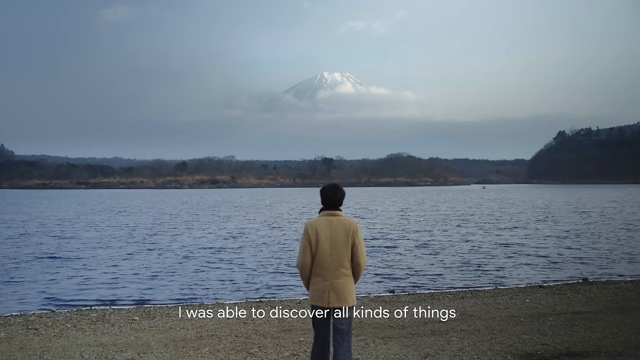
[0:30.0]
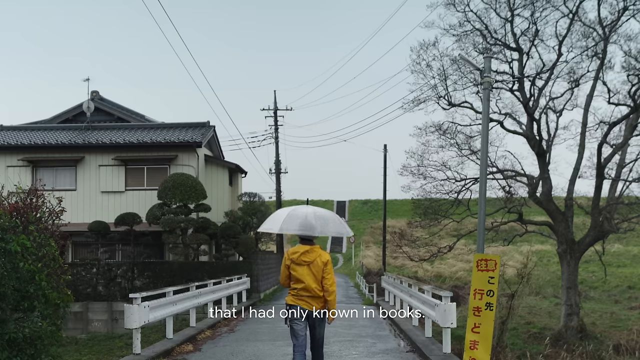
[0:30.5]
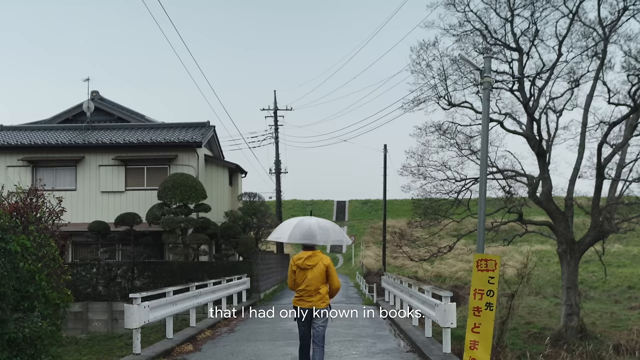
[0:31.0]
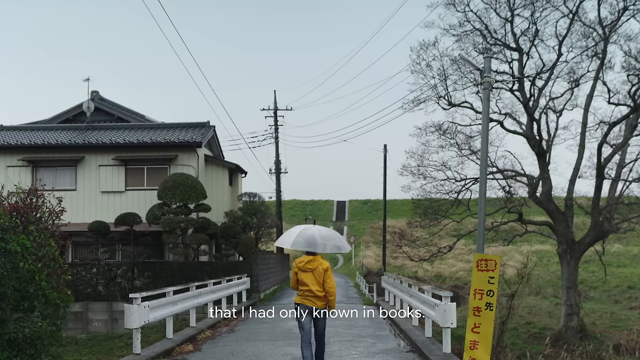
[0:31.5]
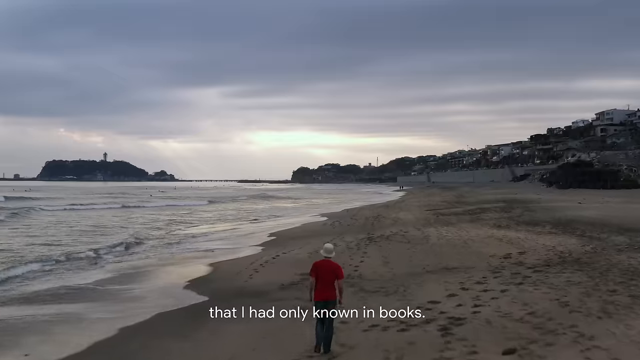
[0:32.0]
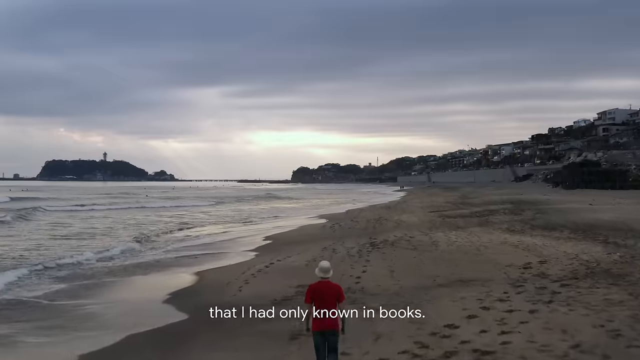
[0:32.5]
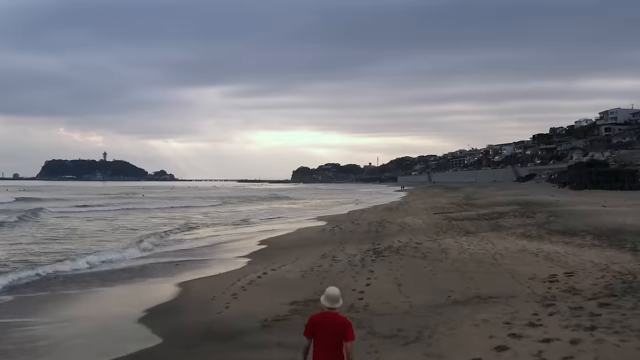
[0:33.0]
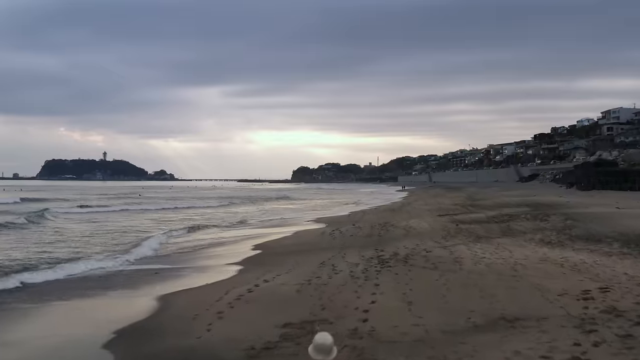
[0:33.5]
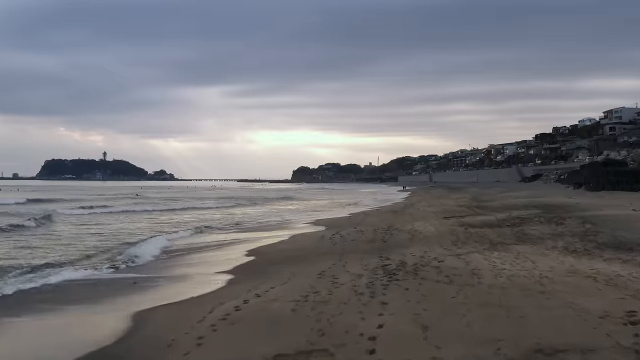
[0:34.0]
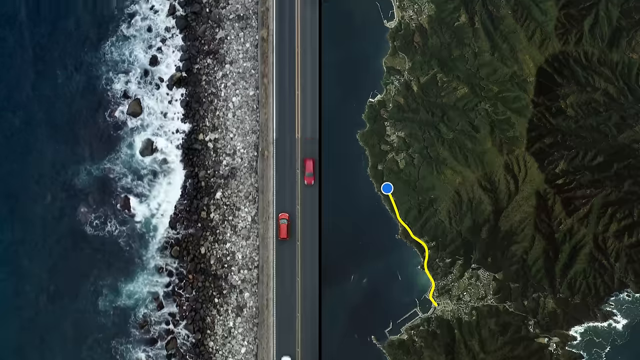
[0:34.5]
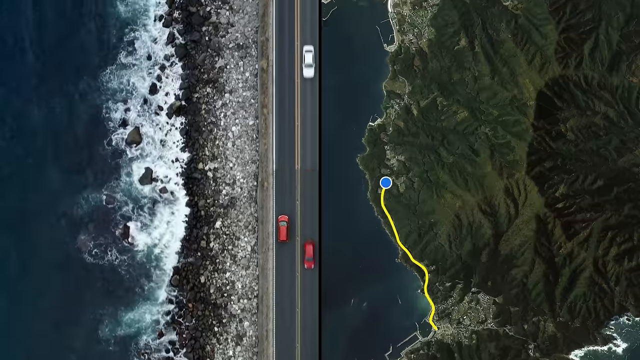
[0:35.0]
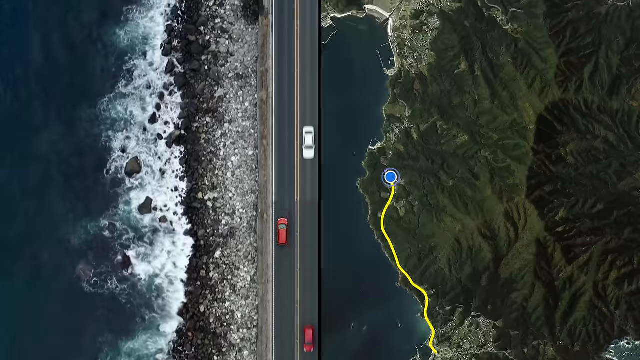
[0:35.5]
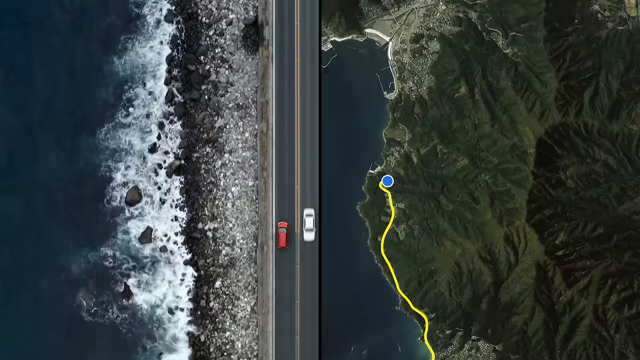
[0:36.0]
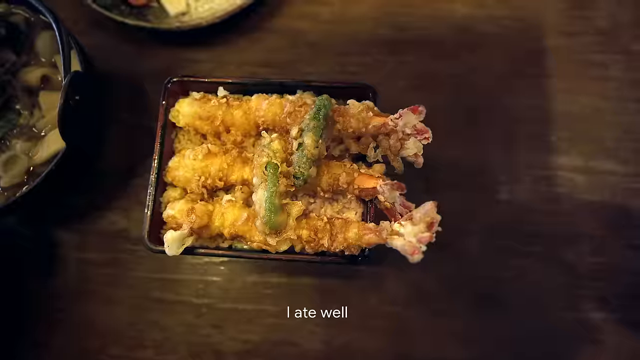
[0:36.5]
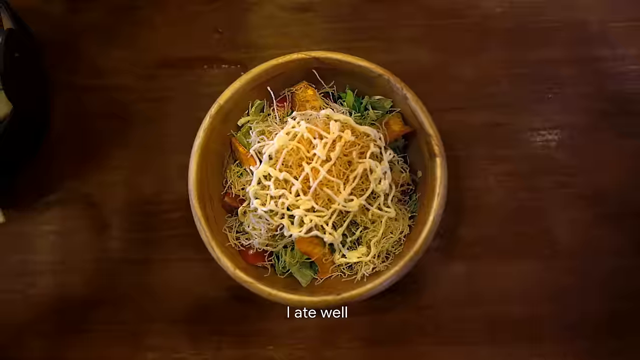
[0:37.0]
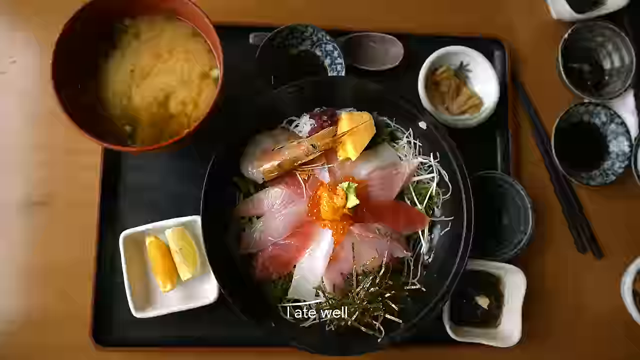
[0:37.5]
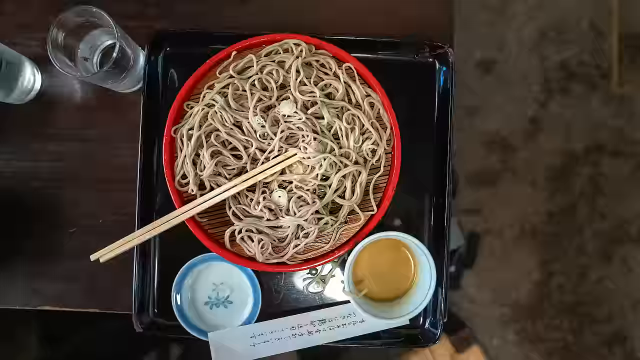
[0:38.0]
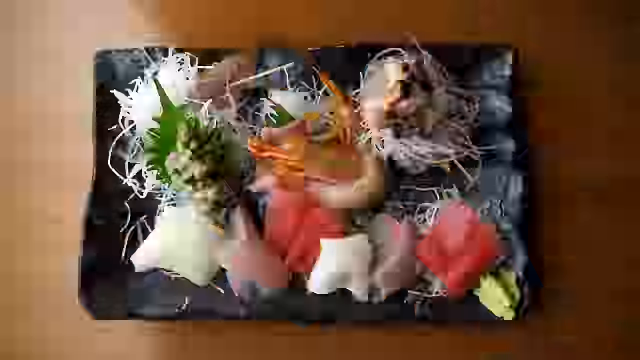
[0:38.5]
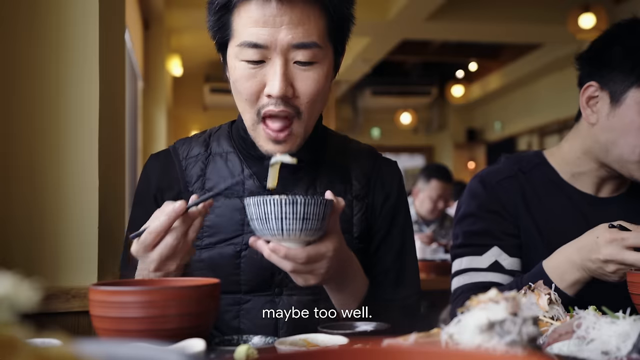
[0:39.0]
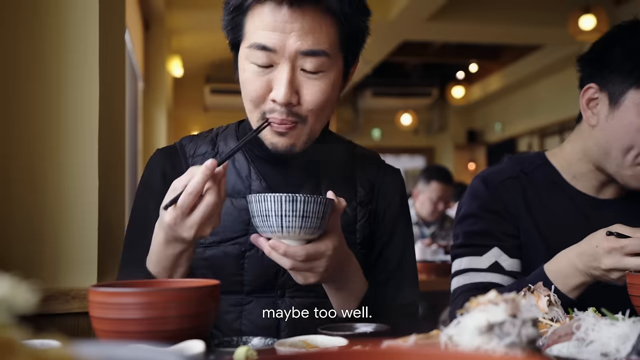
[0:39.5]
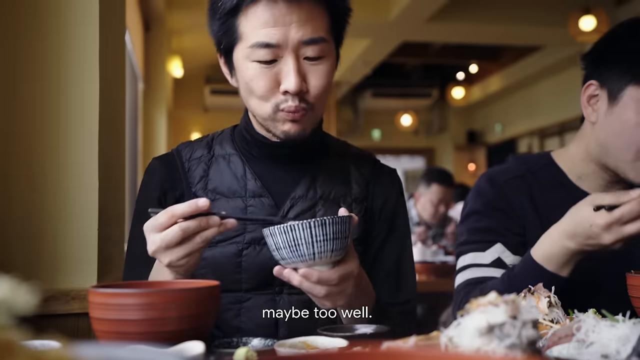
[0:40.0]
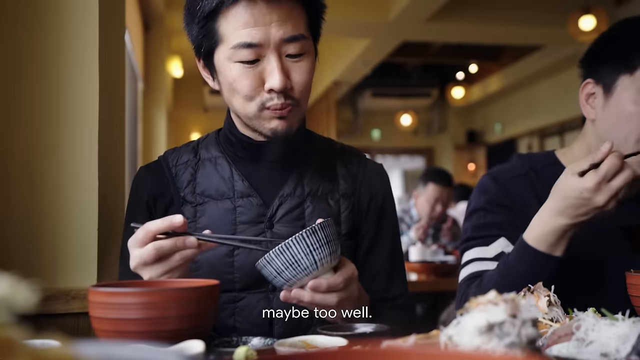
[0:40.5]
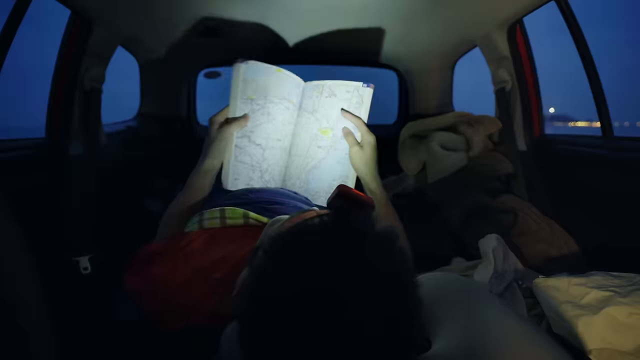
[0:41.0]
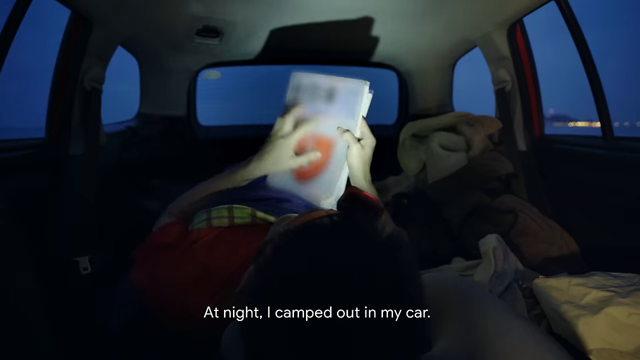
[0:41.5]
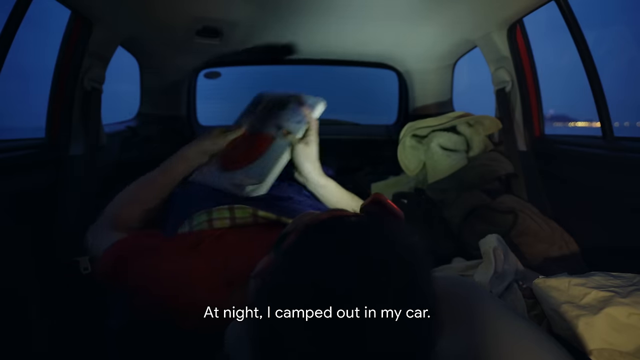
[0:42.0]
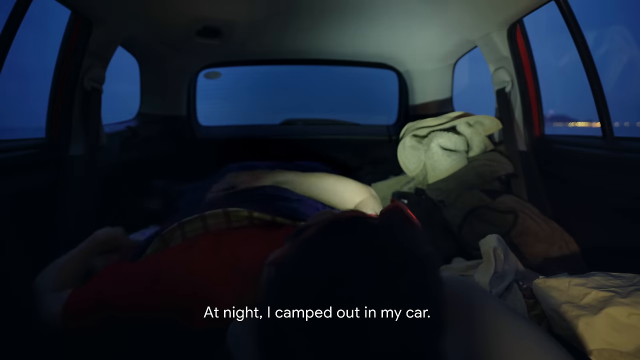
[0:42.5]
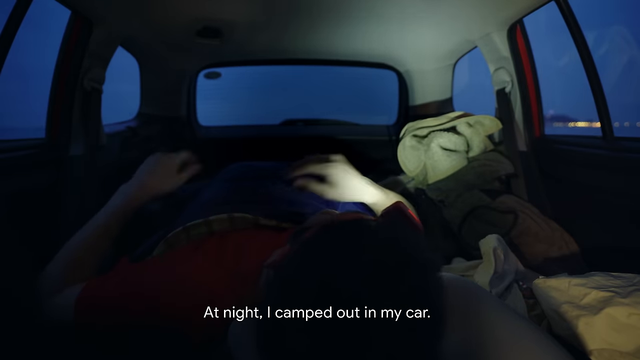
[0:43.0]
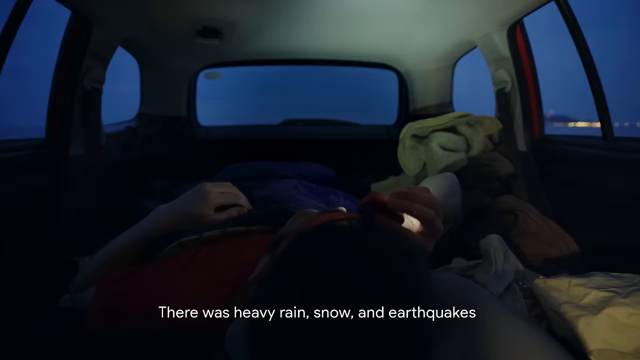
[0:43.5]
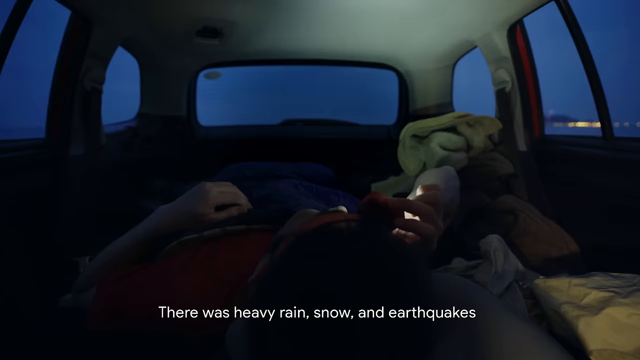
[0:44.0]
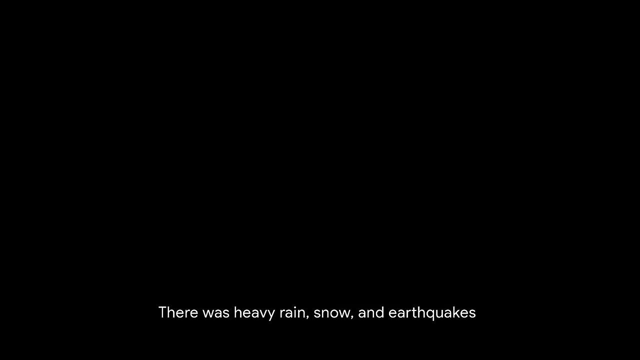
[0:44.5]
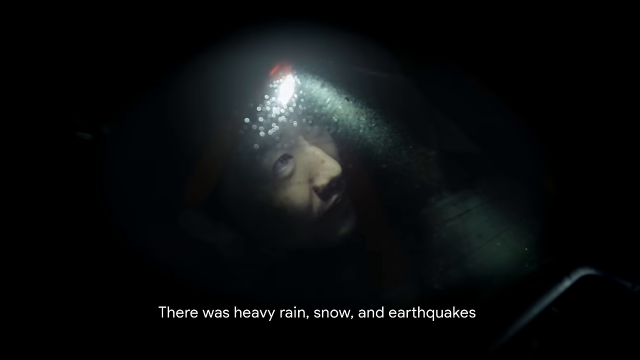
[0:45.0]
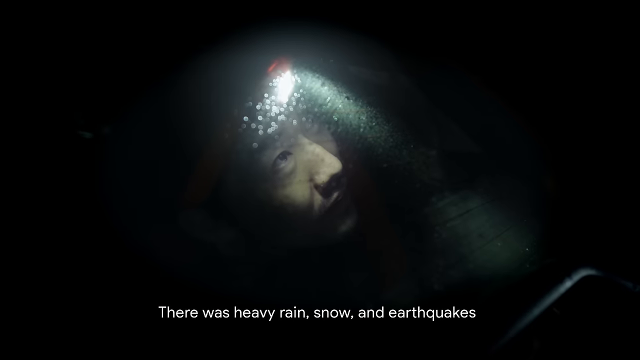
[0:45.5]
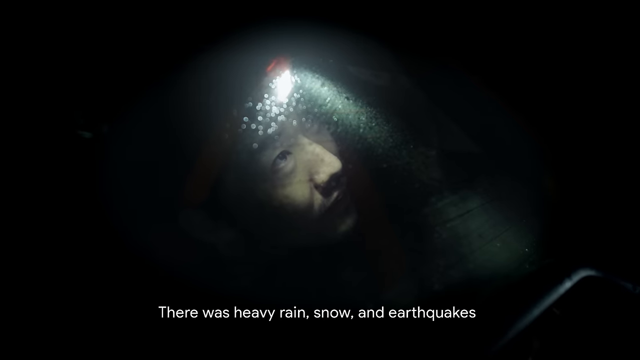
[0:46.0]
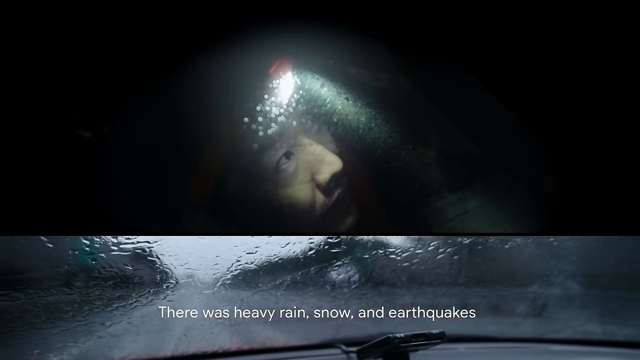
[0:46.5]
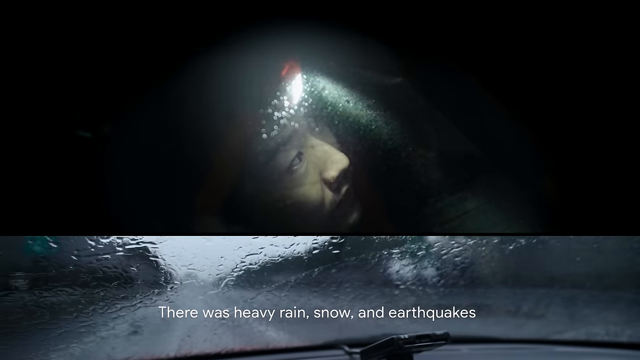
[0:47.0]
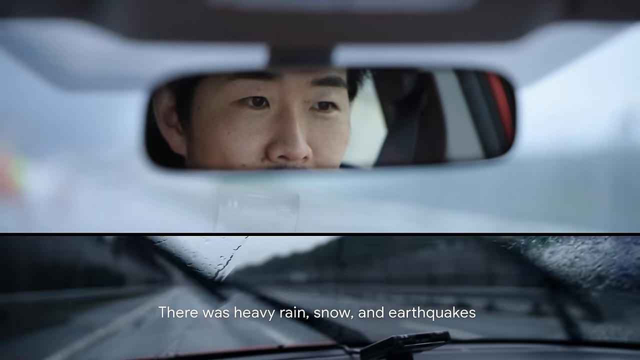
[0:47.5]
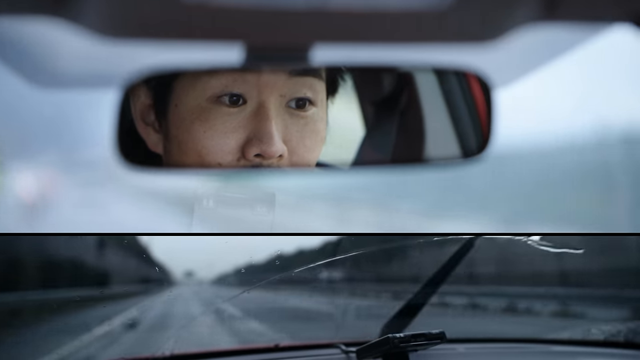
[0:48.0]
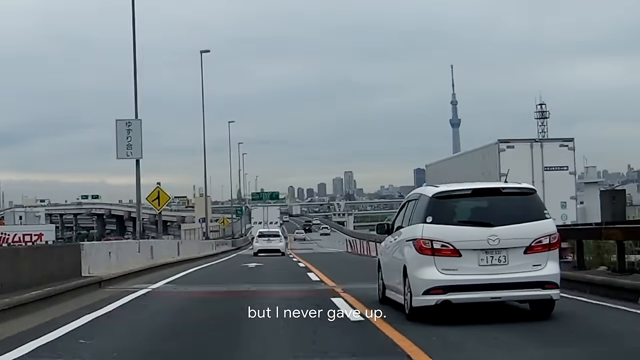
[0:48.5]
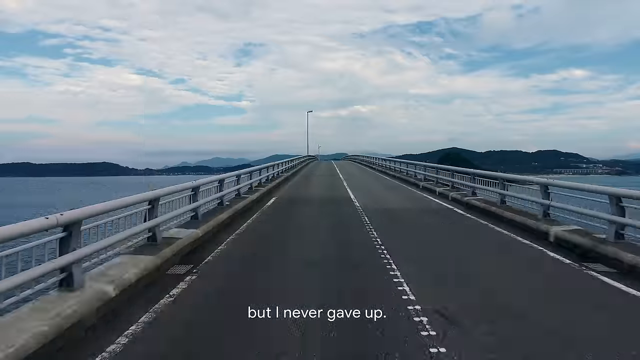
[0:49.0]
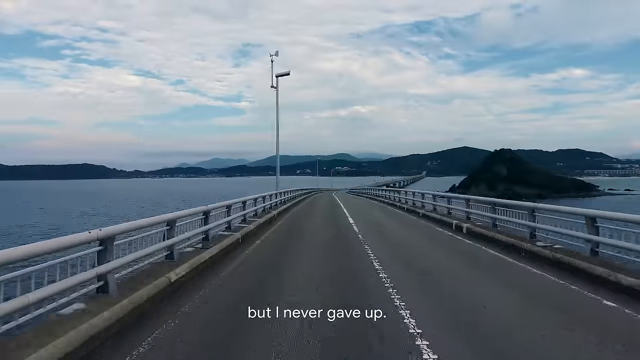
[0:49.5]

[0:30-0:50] He walks along a boardwalk with an umbrella, then along a shoreline, and a map appears. Very swift images of different Japanese foods follow, moving so fast they are hard to make out. He sits at a table eating from a bowl with chopsticks, then camps in a car, lying in the back of it, and there is rain; then he drives very fast through a city. Text runs across these scenes: "that I had only known in books" while he walks along the shore, "I ate well, this was maybe too well" while he eats from the bowl, "at night I camped out in my car" while he lies in the back of his car, "there was heavy rain, snow, and earthquakes" over rain on a windshield, and "but I never gave up" as he drives through the city. The whole sequence is very fast paced.